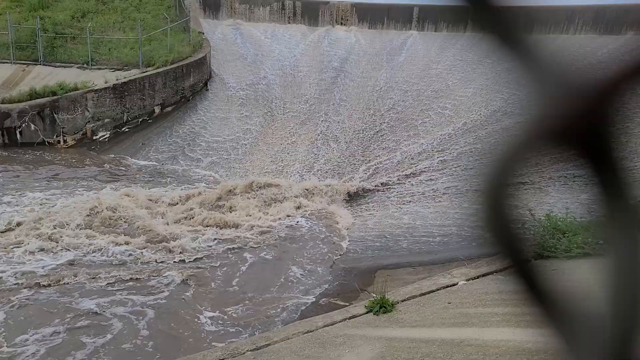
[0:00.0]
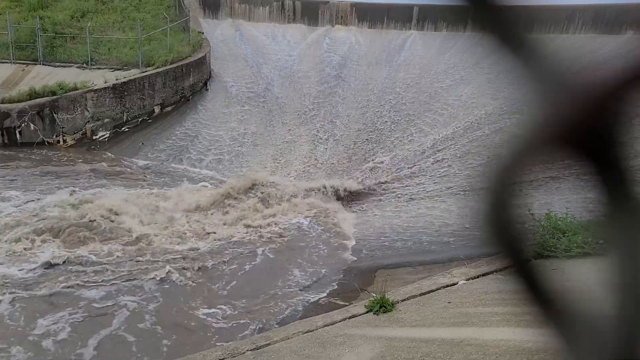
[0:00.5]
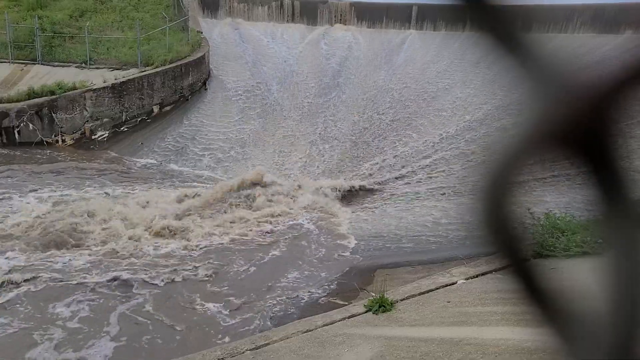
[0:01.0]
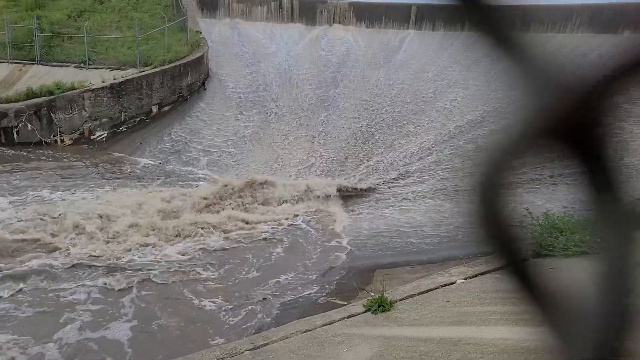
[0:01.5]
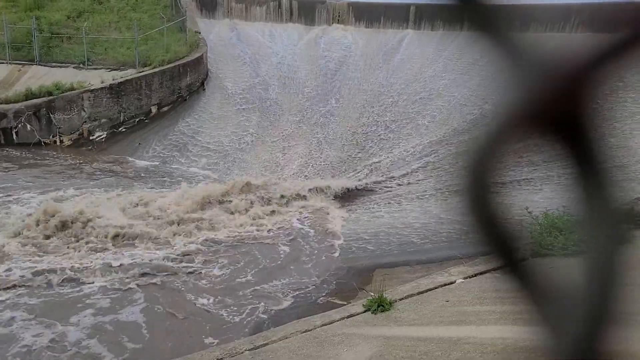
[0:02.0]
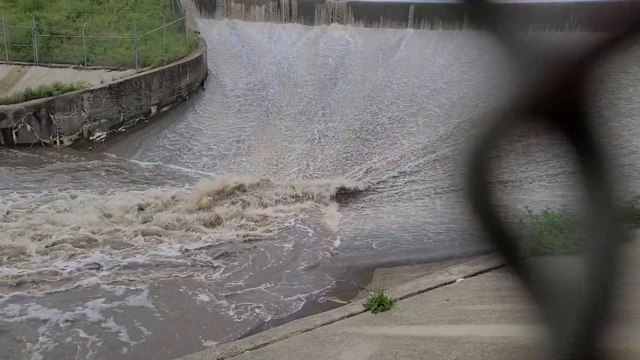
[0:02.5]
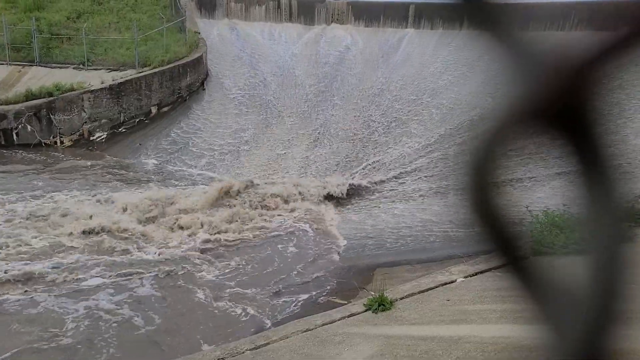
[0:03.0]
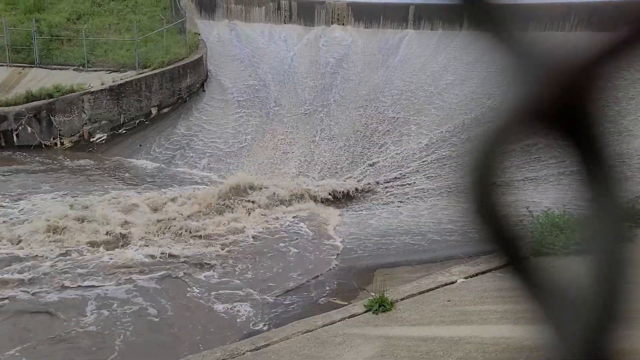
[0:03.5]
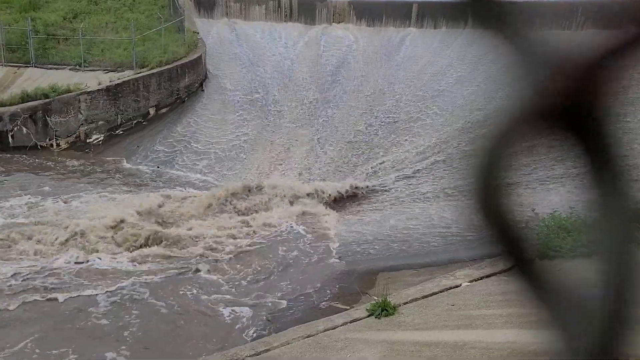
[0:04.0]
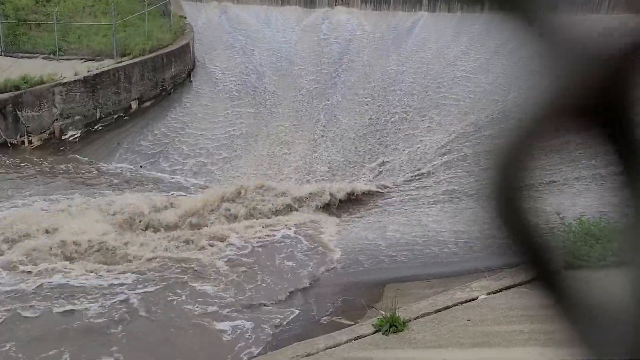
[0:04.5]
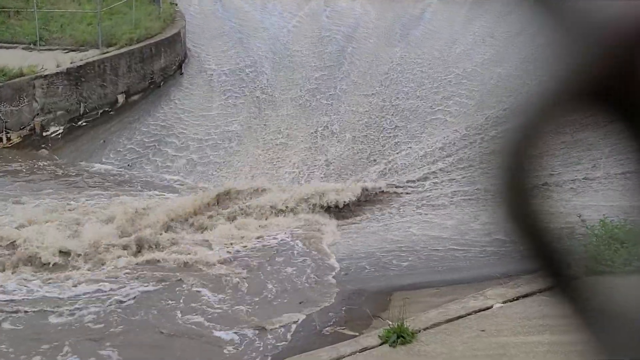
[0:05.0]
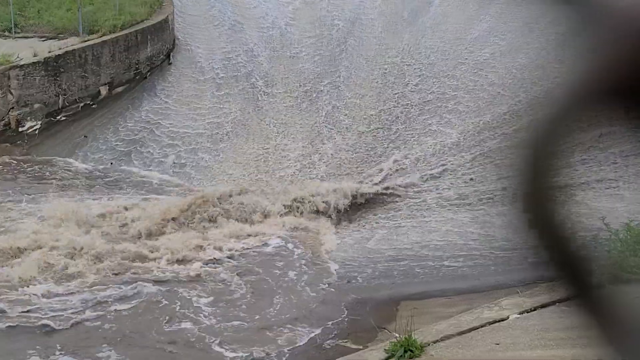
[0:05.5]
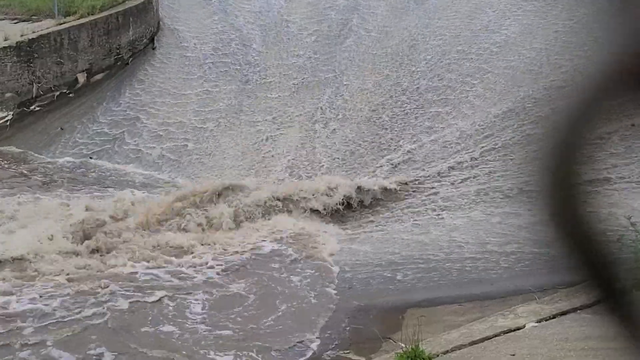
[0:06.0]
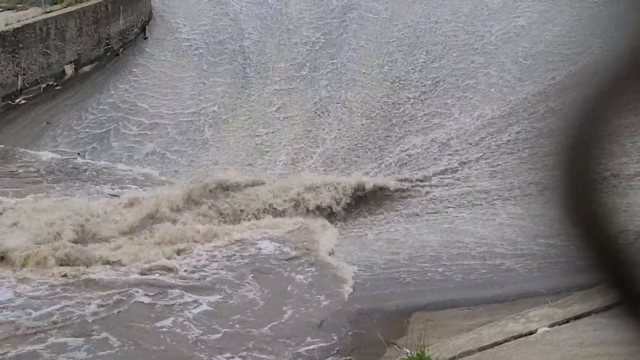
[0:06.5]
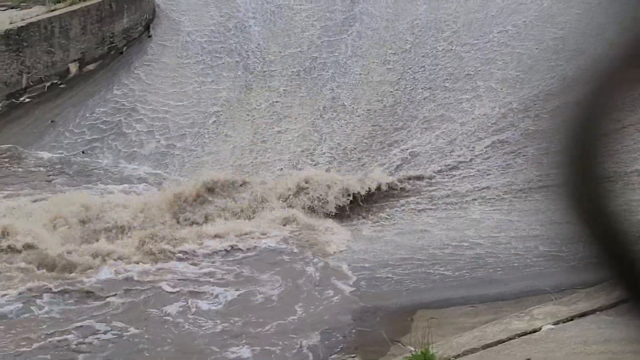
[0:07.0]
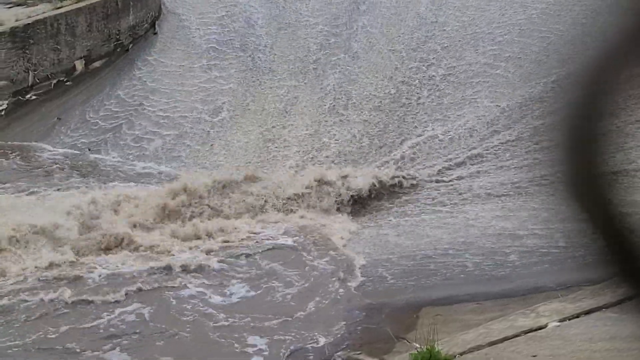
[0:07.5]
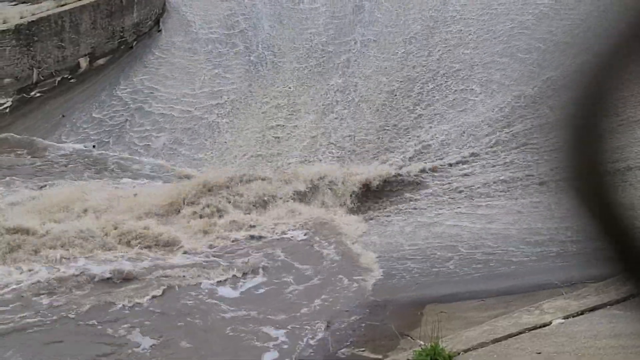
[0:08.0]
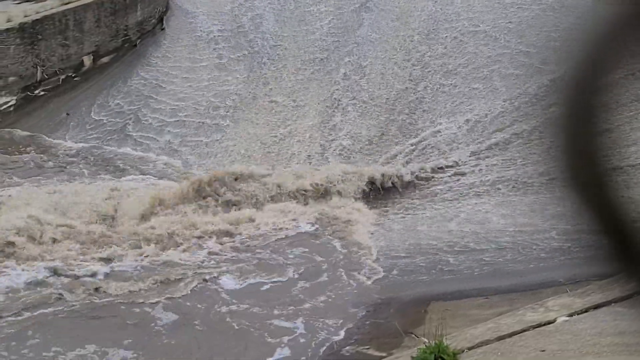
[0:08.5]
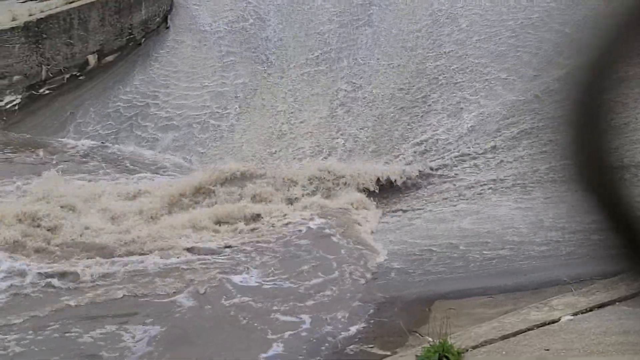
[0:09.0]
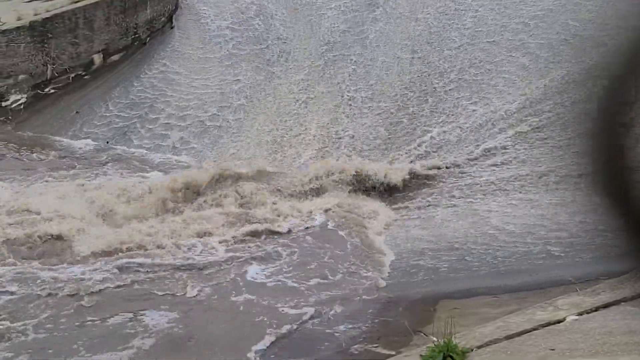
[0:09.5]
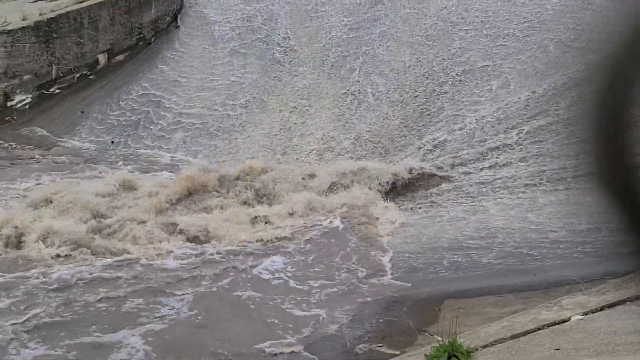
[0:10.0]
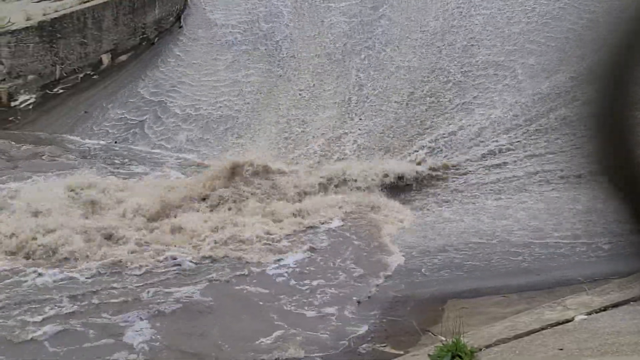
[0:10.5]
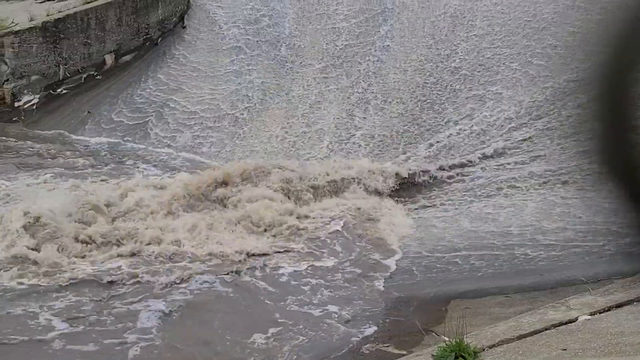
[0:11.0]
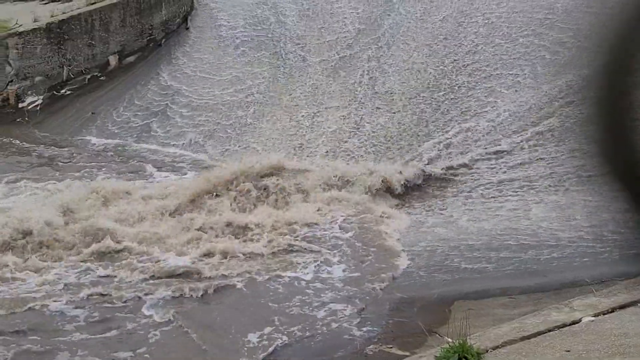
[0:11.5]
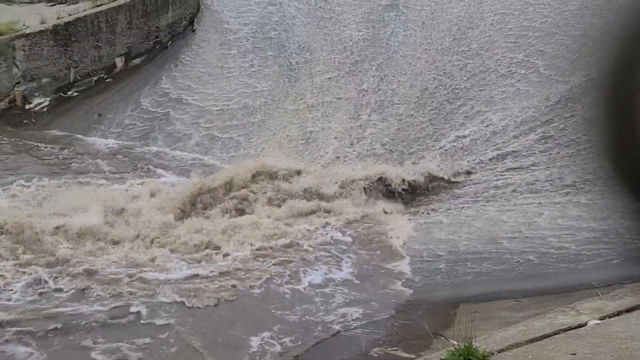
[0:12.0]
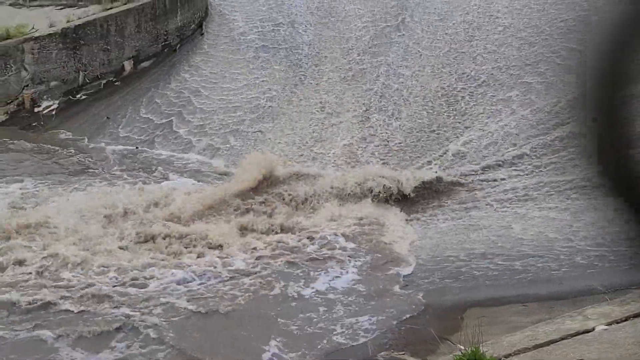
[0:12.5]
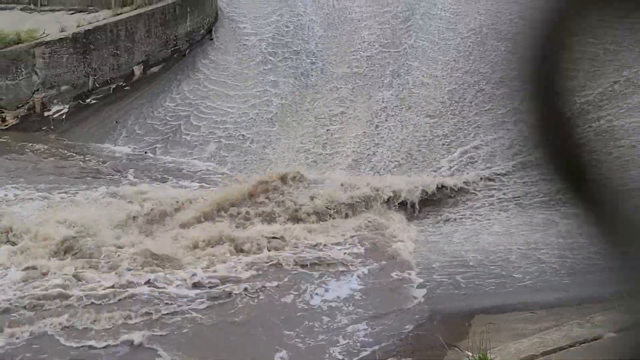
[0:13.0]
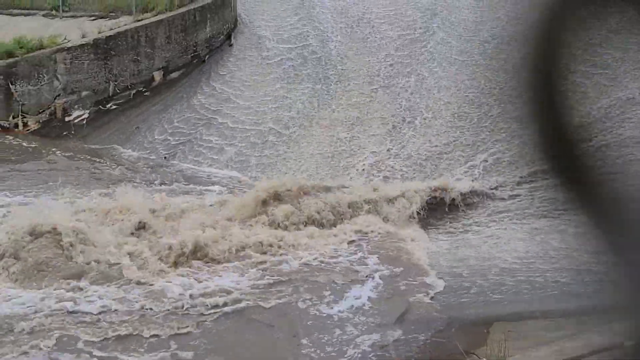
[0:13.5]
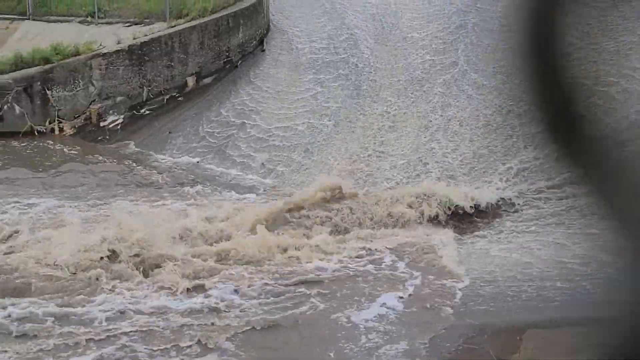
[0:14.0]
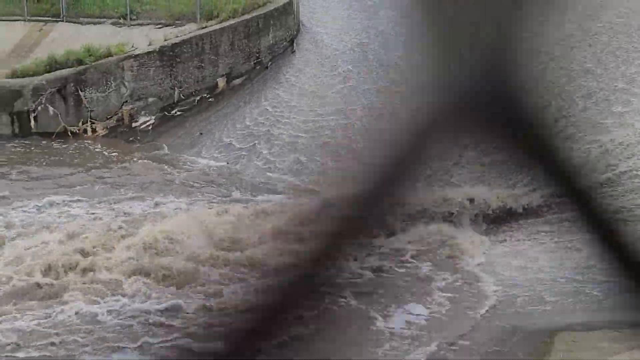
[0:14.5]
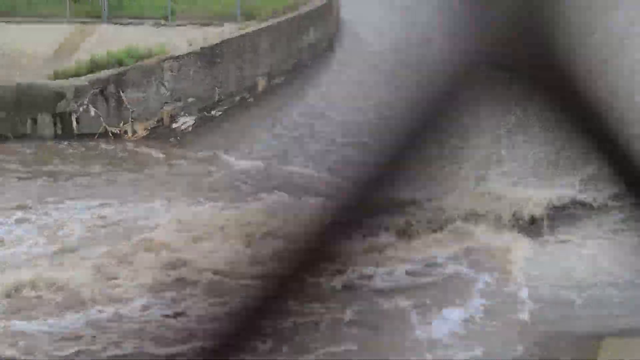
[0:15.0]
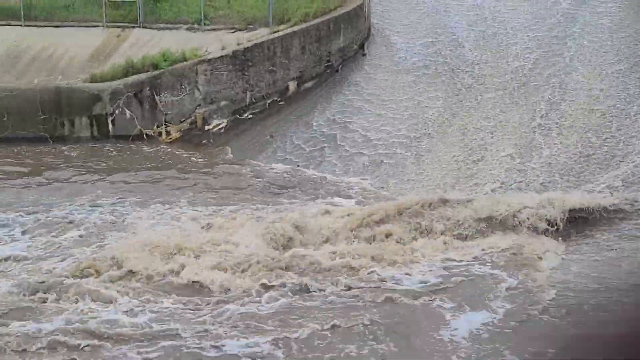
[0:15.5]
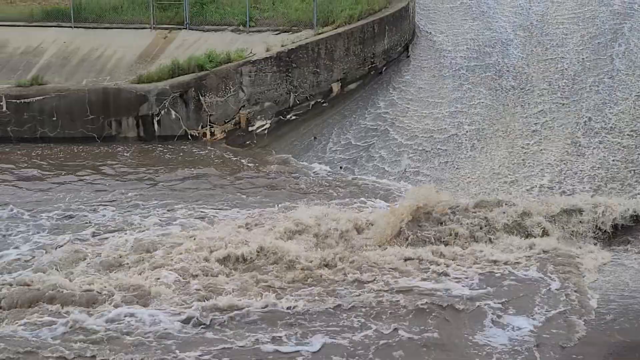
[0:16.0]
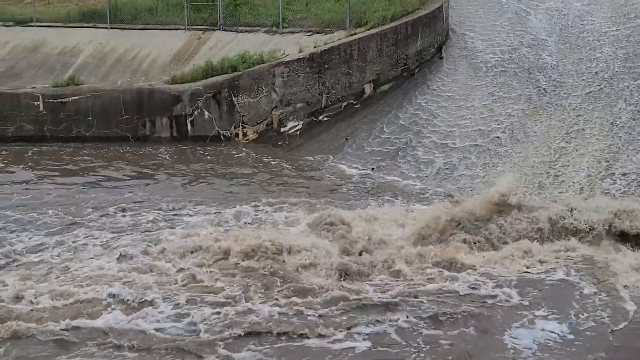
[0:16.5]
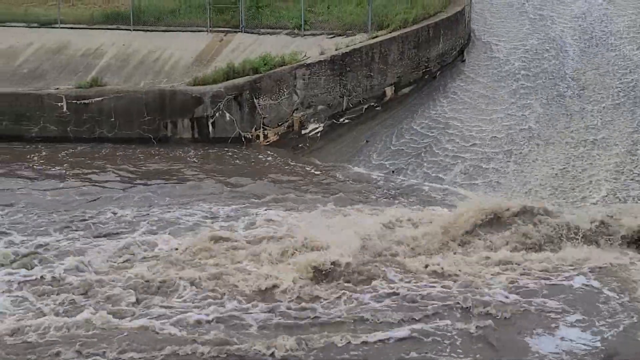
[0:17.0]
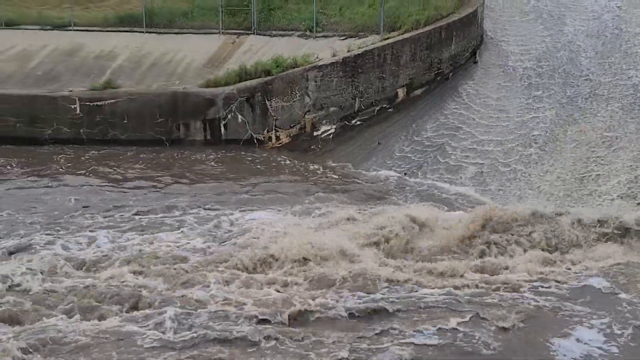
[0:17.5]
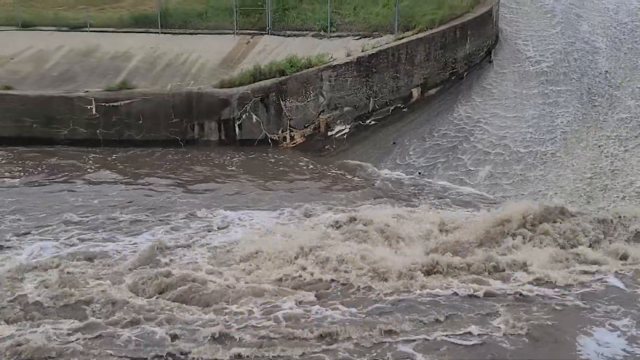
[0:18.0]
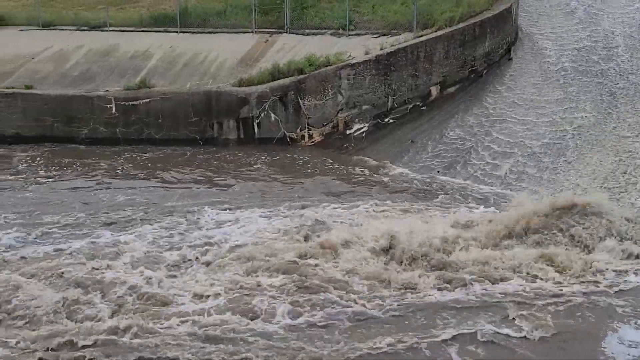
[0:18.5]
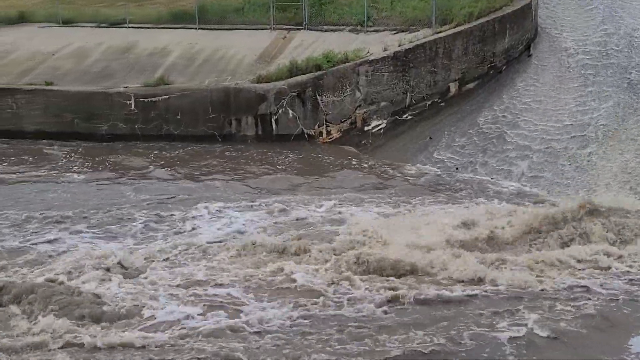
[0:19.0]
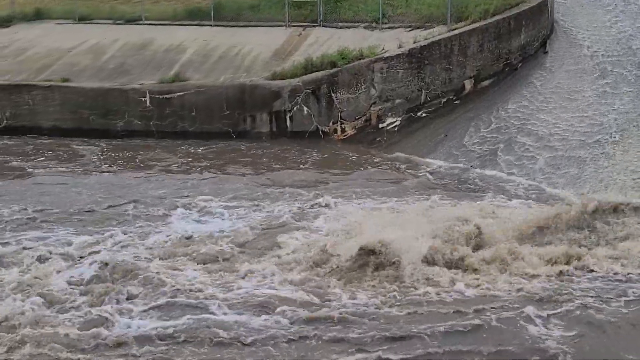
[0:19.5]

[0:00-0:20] Water flows downwards and inwards into a sort of pool, where it gushes out. It is not exactly a waterfall; the water flows down and curves to one central area, then gushes out and flows into the main body of water. The water is brownish and looks dirty, and the area appears to be some sort of dam. Water seems to come out from the top and then flow downwards in a curved fashion, almost as if it is coming down from a separate river or body of water.